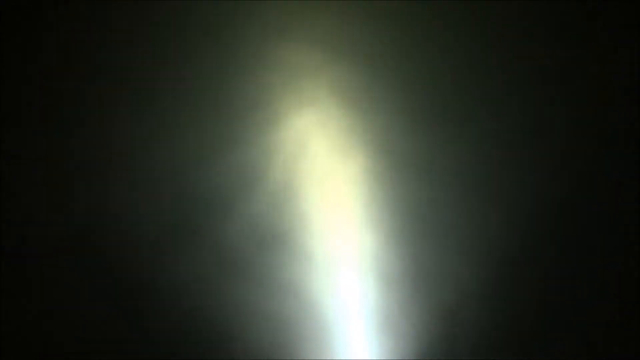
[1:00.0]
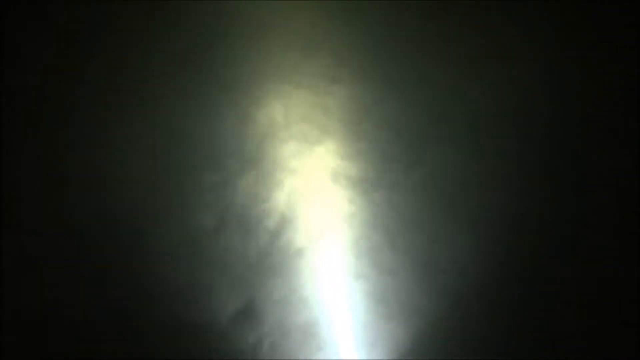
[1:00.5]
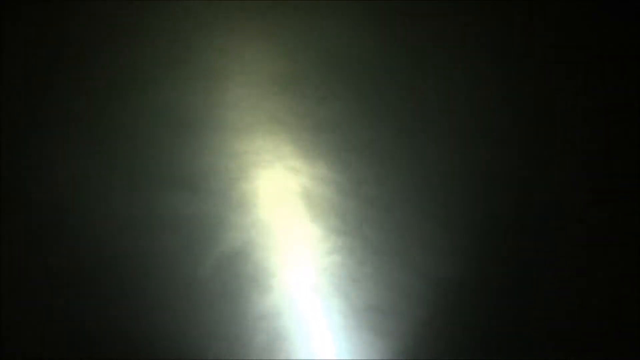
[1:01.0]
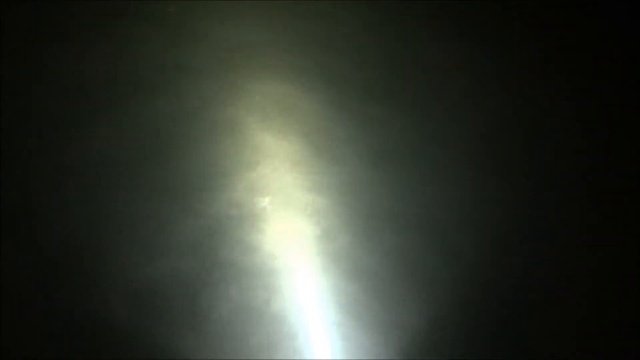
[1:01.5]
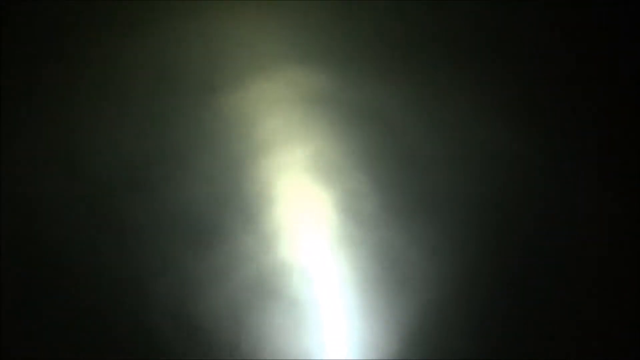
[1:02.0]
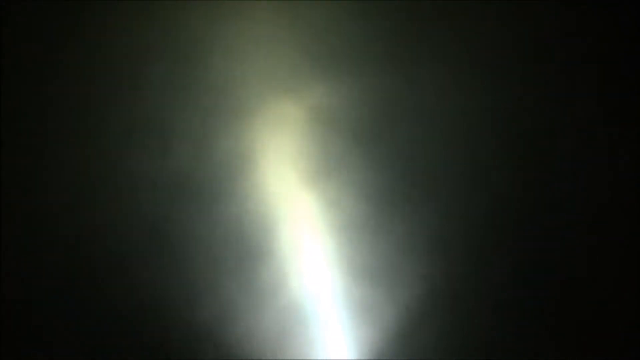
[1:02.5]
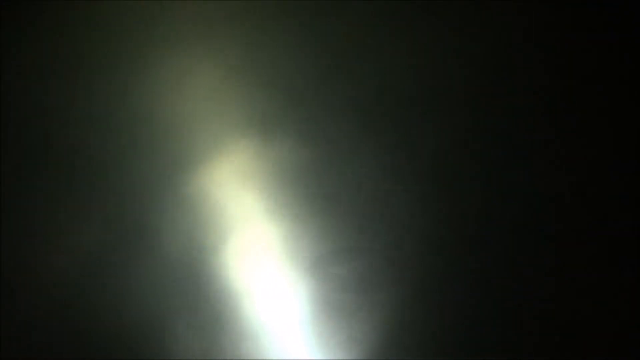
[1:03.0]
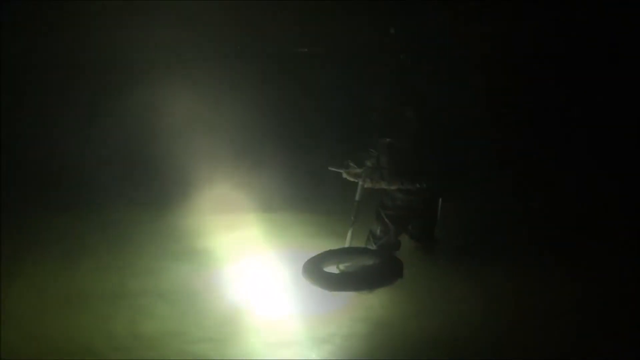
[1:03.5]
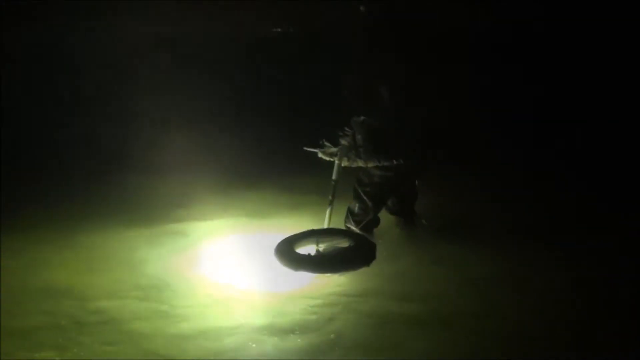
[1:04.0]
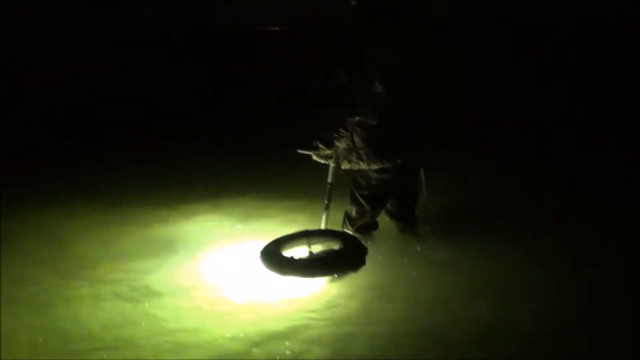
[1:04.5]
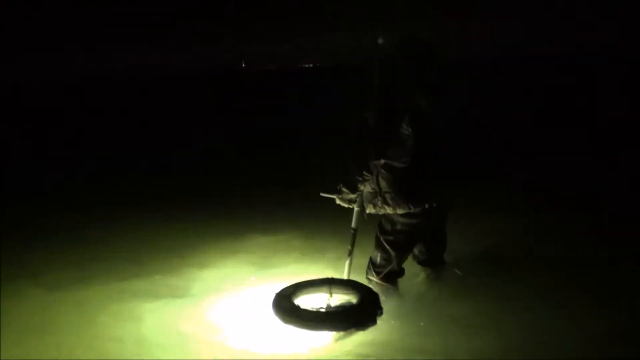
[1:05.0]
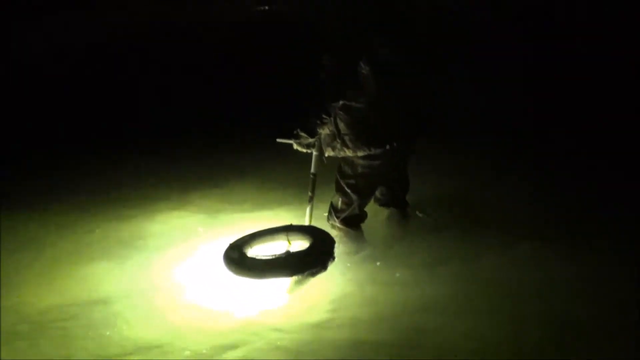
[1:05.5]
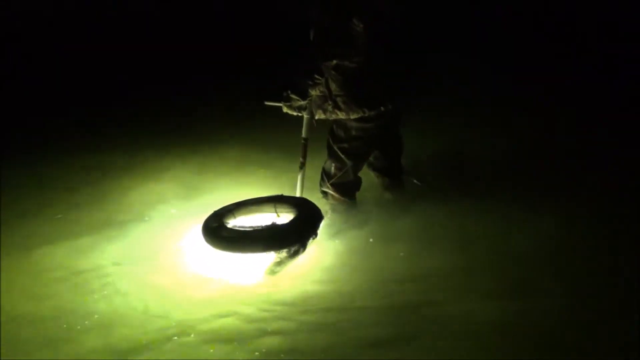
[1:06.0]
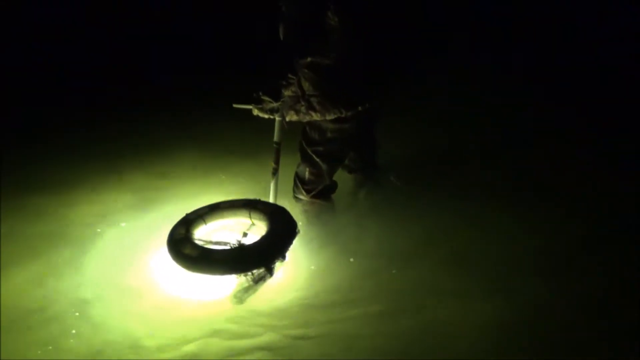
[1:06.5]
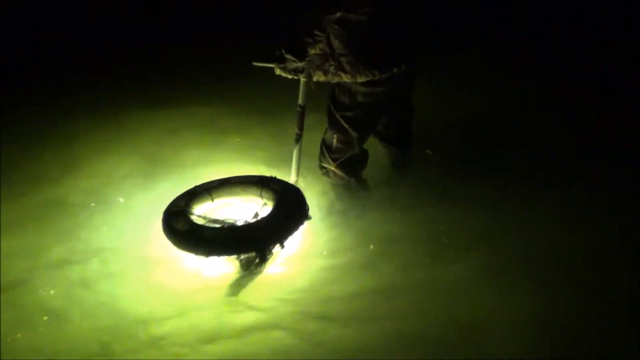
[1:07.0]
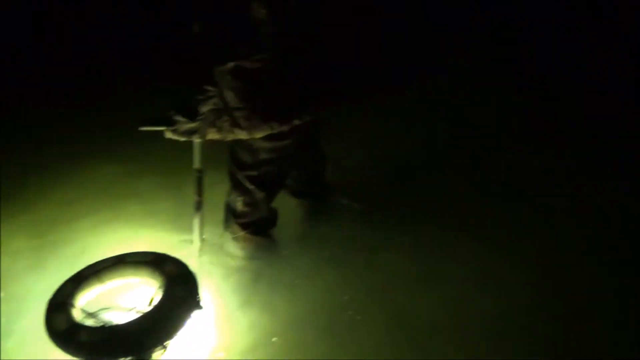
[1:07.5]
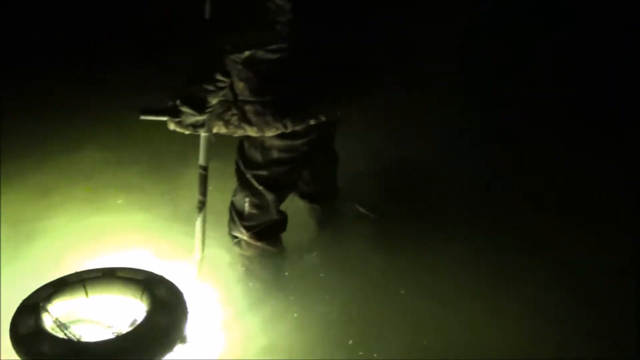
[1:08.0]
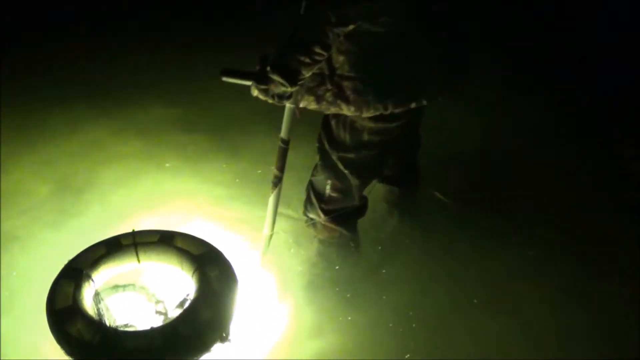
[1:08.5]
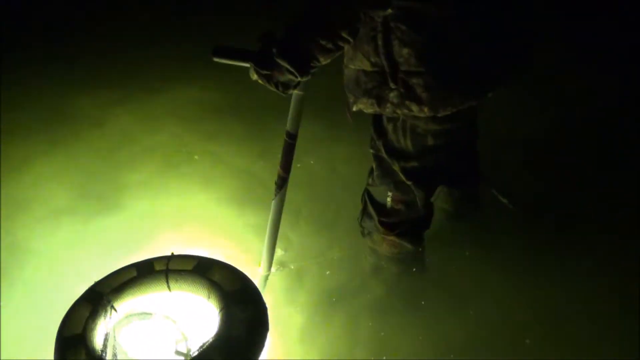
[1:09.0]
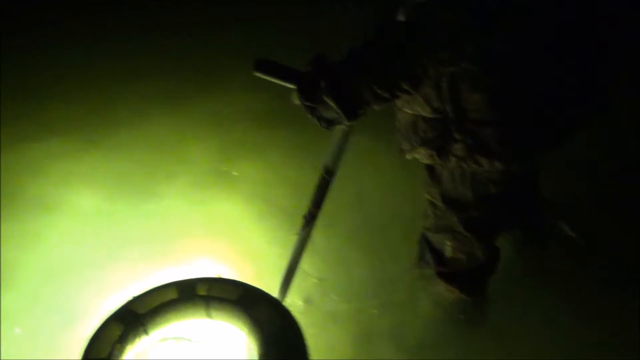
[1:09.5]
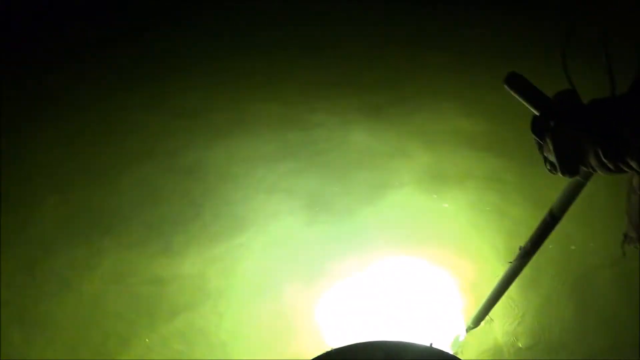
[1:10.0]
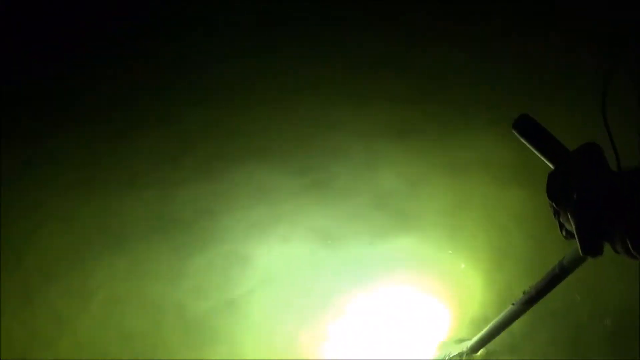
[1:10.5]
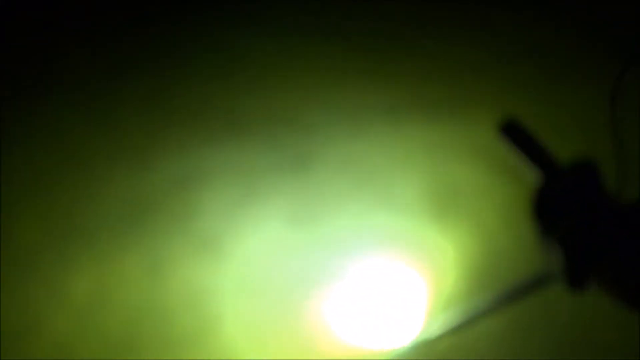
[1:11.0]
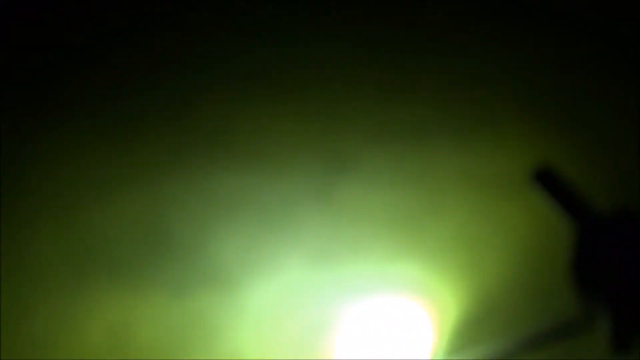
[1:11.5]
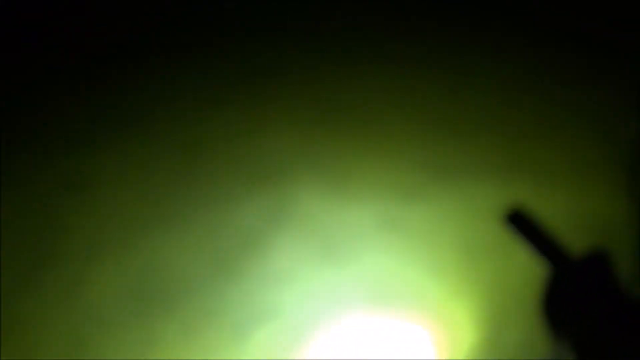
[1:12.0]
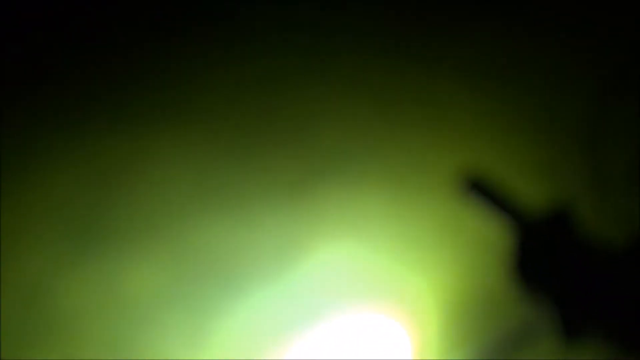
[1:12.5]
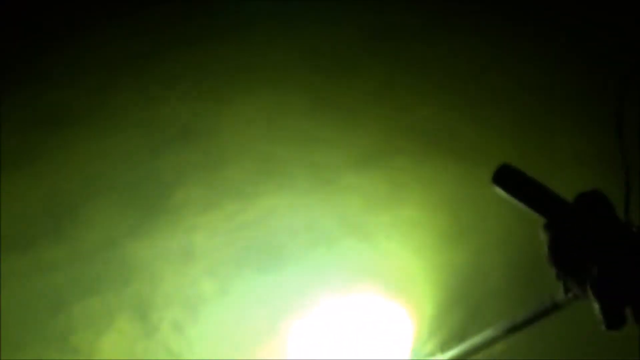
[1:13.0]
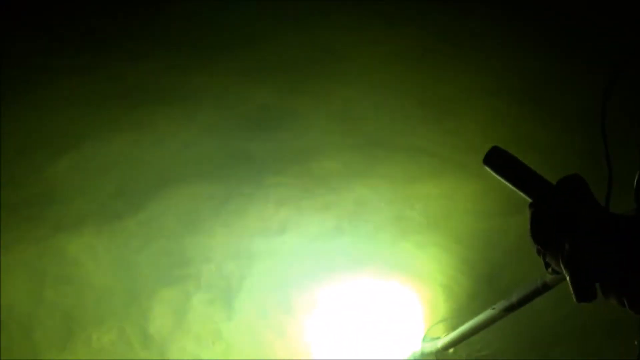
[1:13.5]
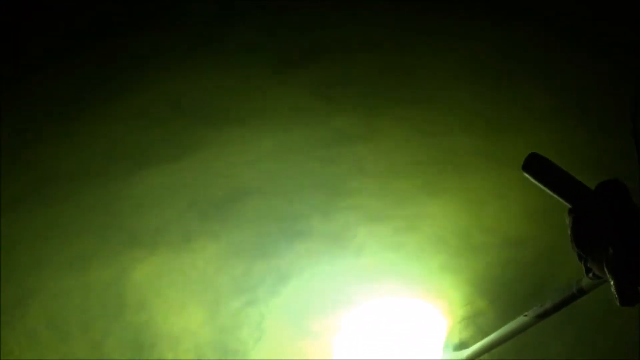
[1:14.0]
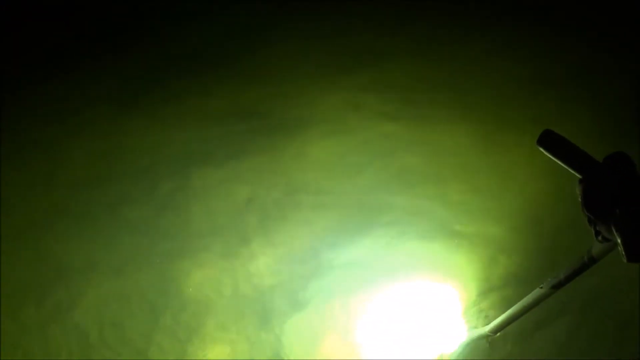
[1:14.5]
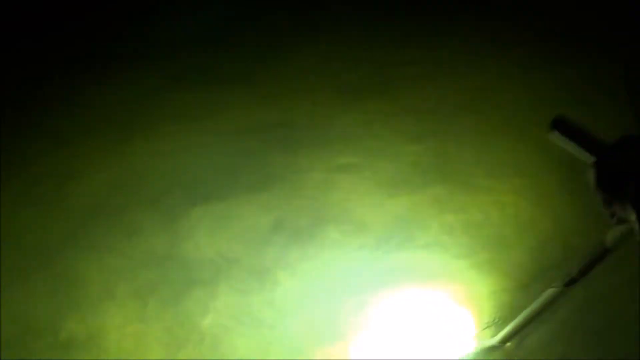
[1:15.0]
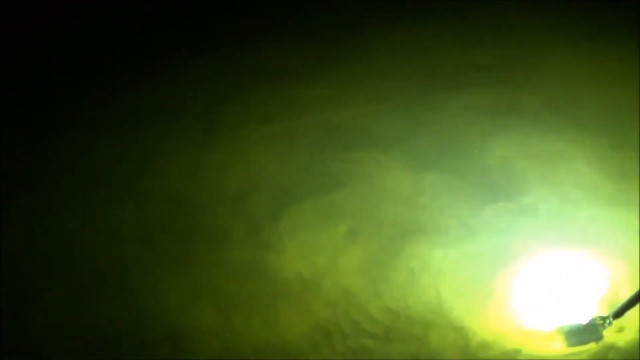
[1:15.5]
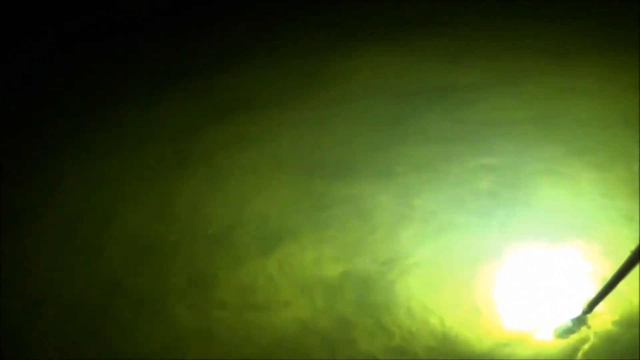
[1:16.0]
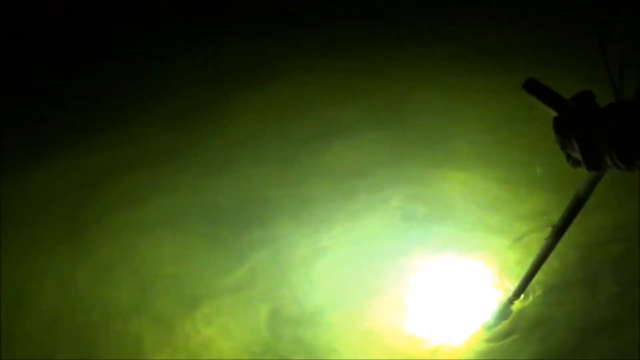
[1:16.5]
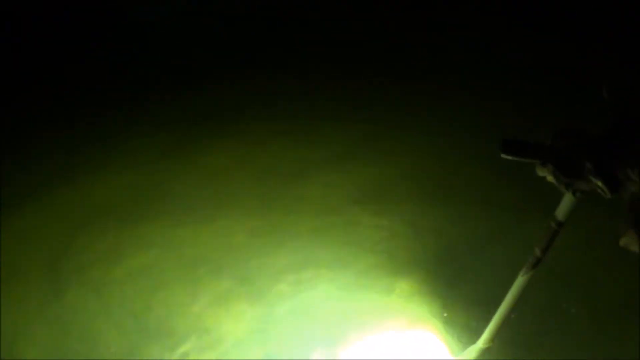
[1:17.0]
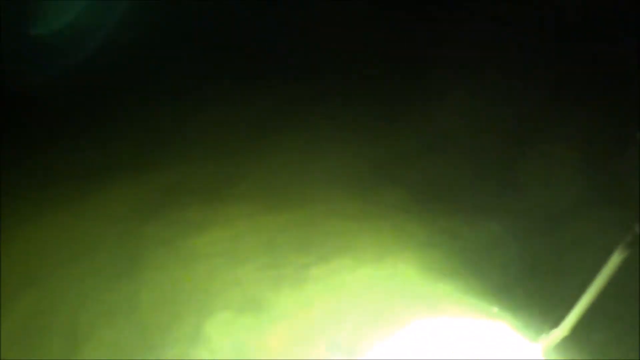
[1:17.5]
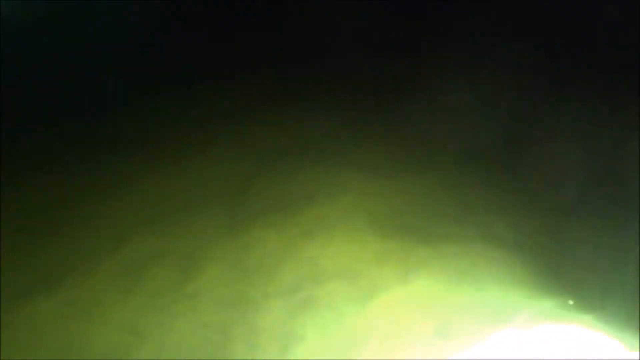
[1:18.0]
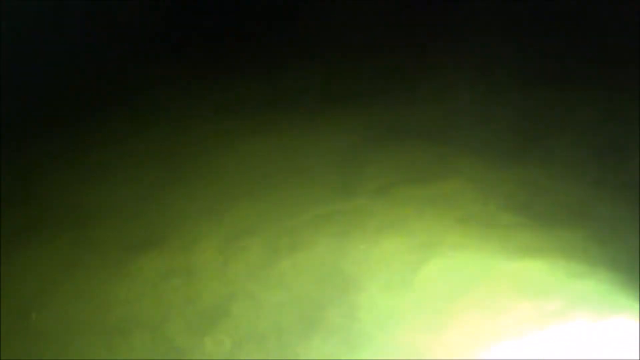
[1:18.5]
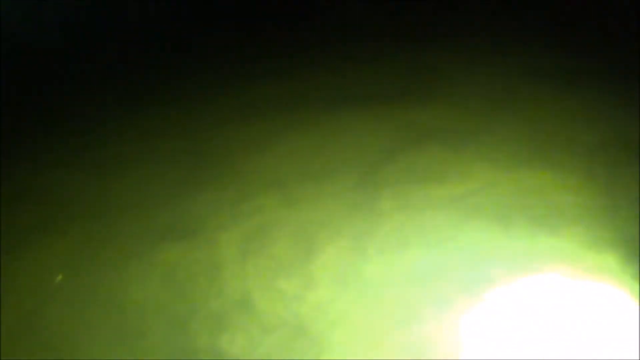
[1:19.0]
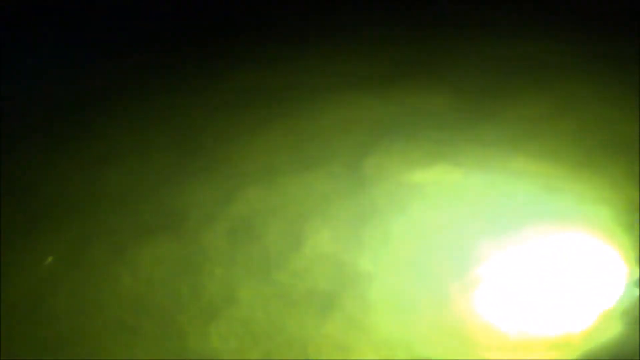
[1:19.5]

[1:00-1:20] The water is still shown illuminated by a lamp at night, with only its movement and the small waves visible; everything is calm. A man is then seen standing in the water, which reaches a little above his knees. He seems to be dressed in heavy clothing, full of cables or something similar. Between his hands he holds a very strange device: a kind of steering wheel with a stick connected to a circle floating in the water, like a tire or a black circular, donut-shaped float. The camera comes a little closer, but it is still difficult to discern what the device is.